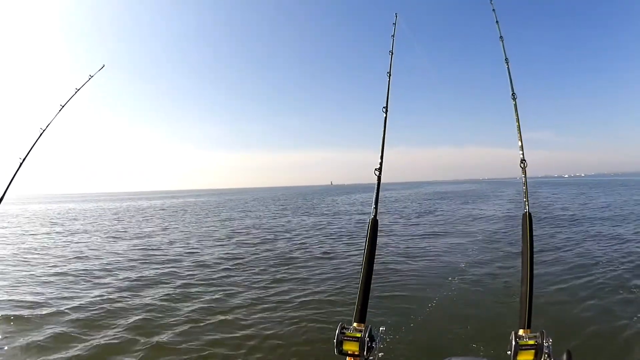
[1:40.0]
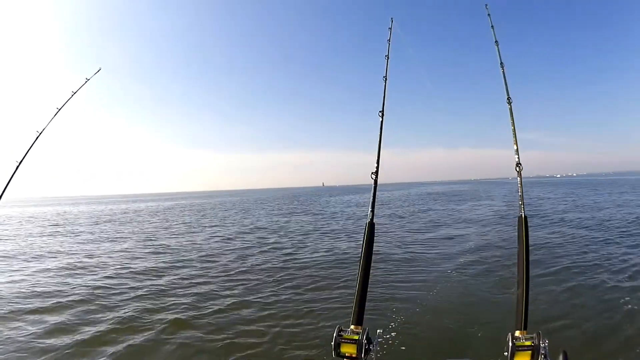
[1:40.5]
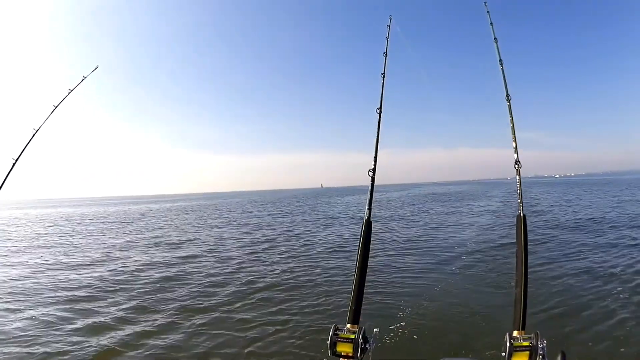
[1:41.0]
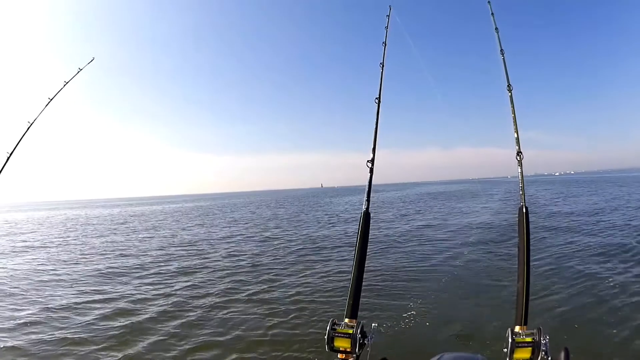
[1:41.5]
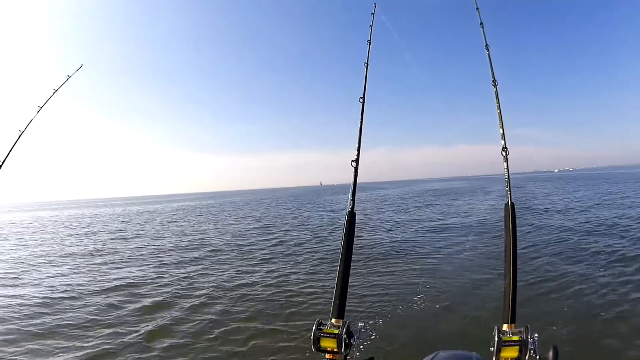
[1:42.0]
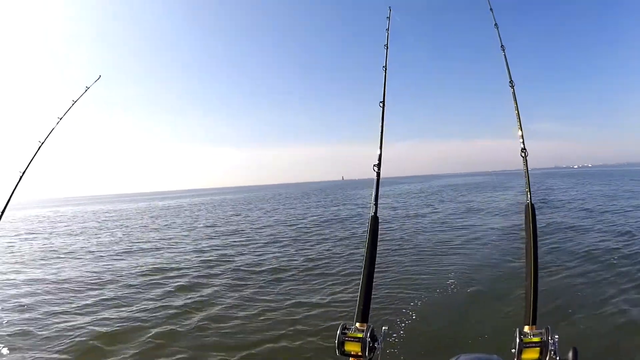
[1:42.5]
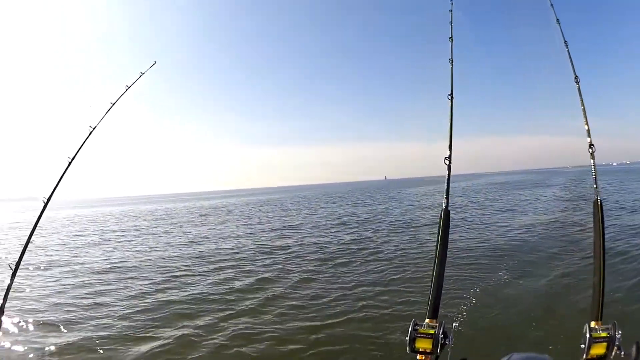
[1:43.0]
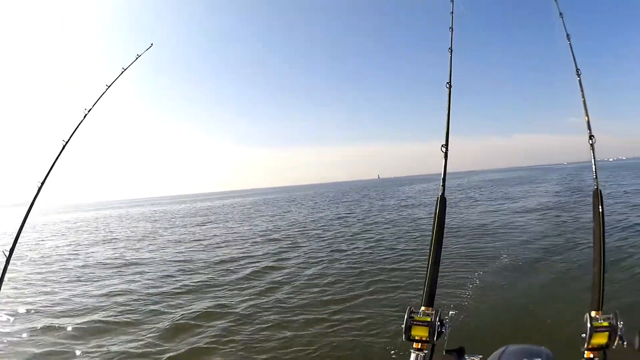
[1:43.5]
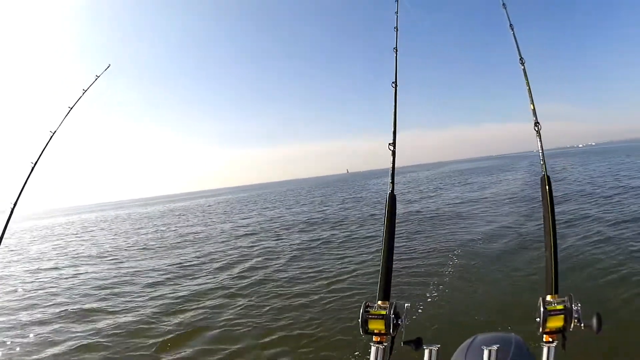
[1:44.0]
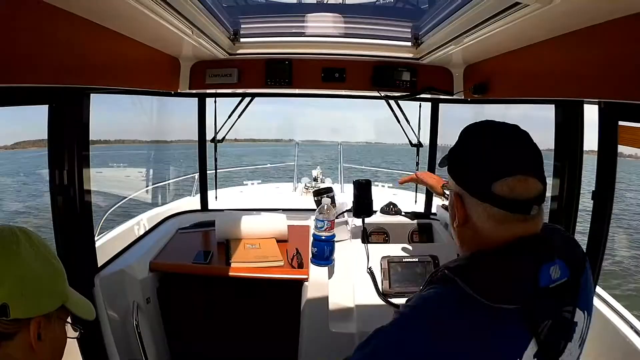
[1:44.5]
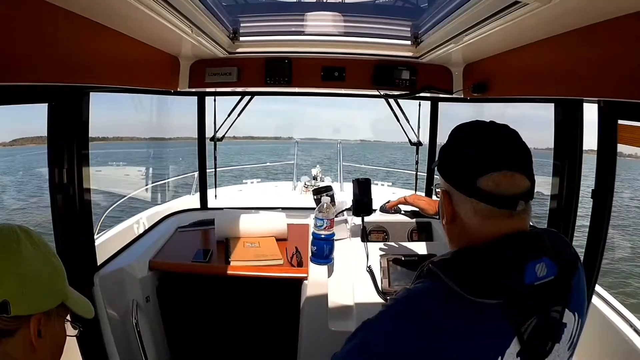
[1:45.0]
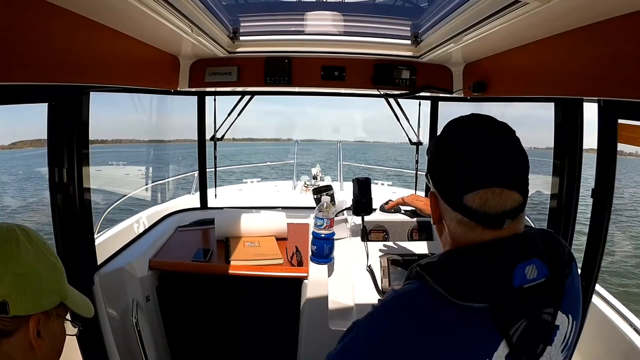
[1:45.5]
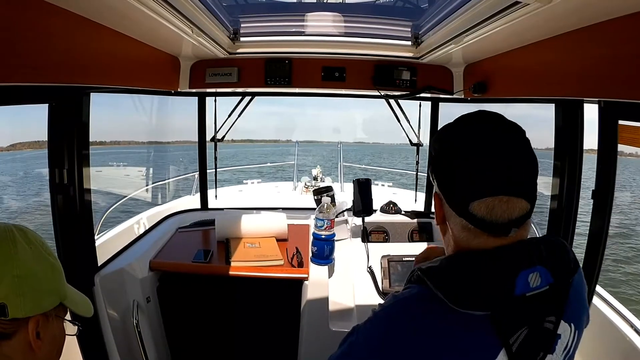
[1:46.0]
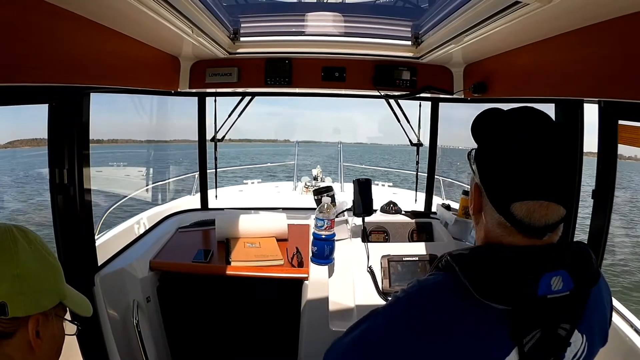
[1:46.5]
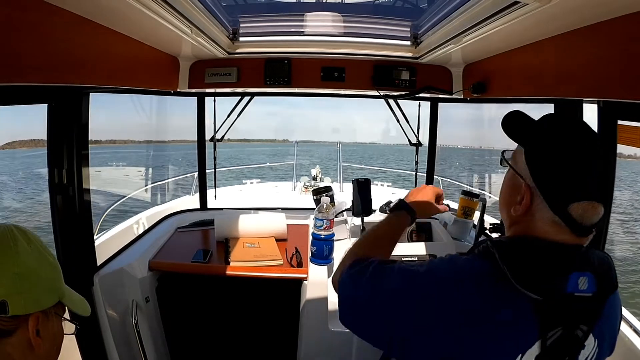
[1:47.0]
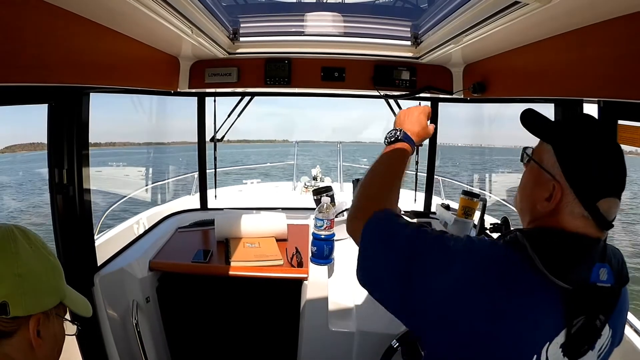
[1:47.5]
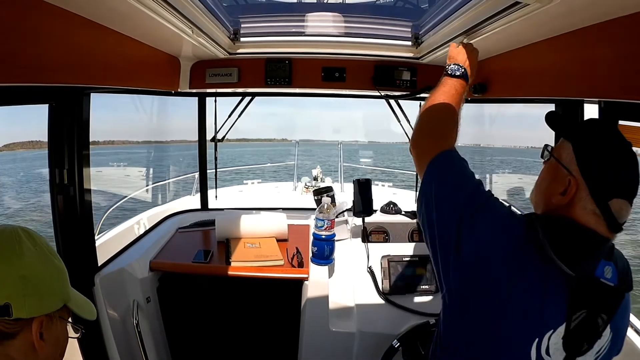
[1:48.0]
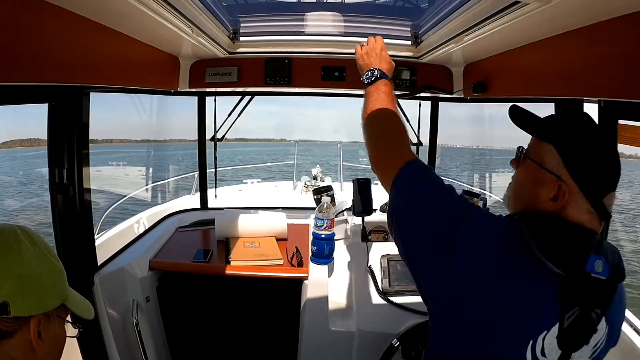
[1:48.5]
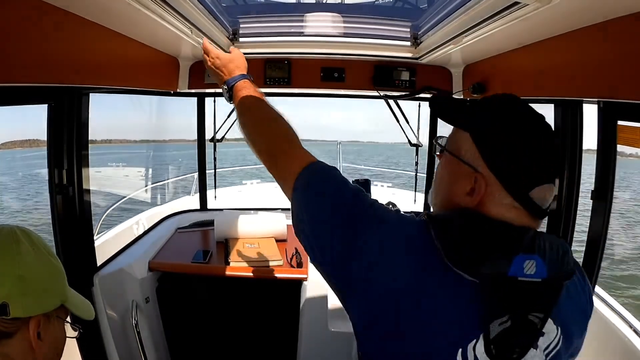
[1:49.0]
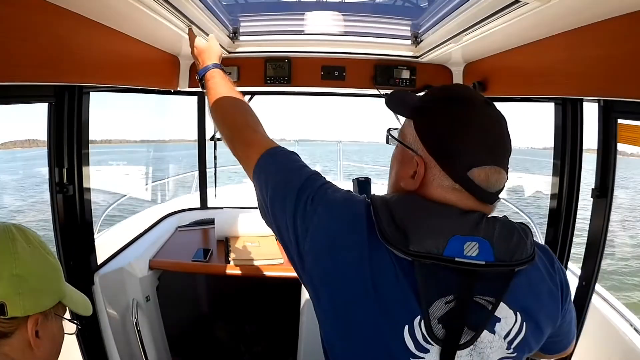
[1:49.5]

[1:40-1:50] A view shows all of the fishing rods set up to catch fish, and the water in front of the boat as the boat moves. The fishing rods appear to be attached to the back of the boat, and the boat is moving even though the rods look like they are in use. The next shot shows the inside of the boat. A person in a yellow hat is on the left-hand side. The person in front wears a black hat, a blue shirt, and a black vest with a blue patch bearing a symbol on its back, plus a blue band or watch around the left wrist. A water bottle sits inside a blue cup, and there is a book on the table and what looks like a phone.